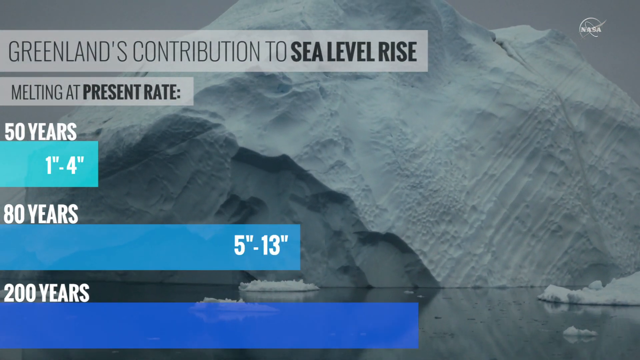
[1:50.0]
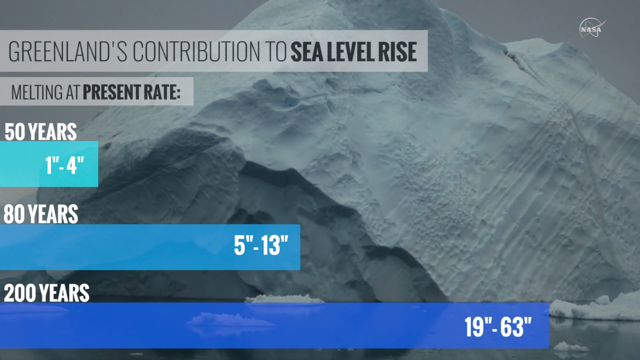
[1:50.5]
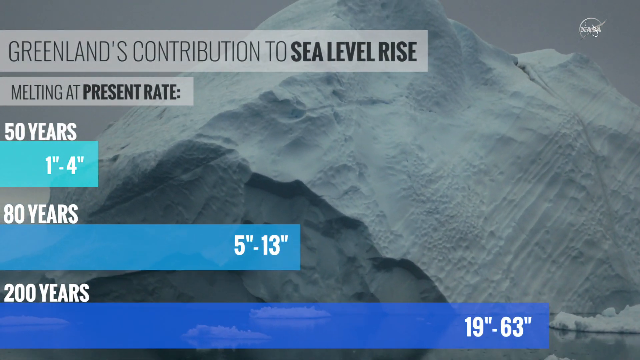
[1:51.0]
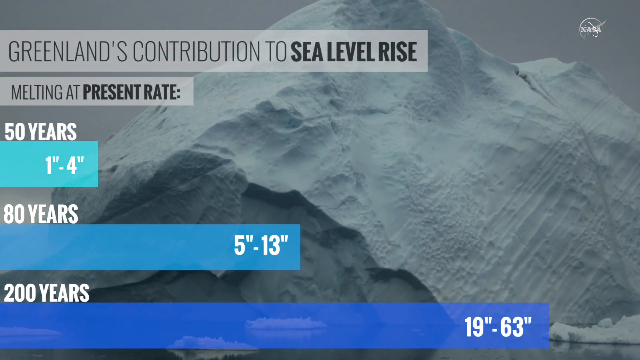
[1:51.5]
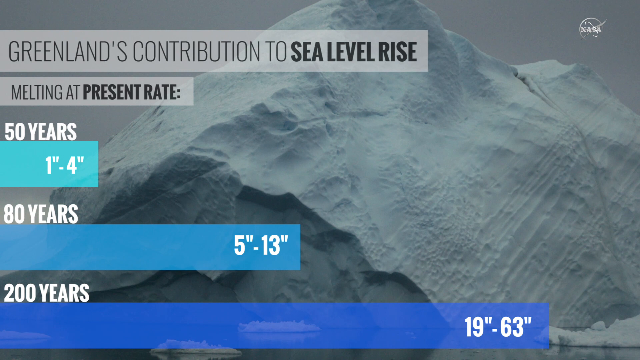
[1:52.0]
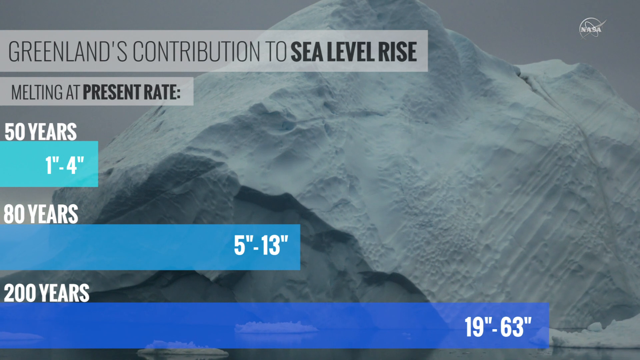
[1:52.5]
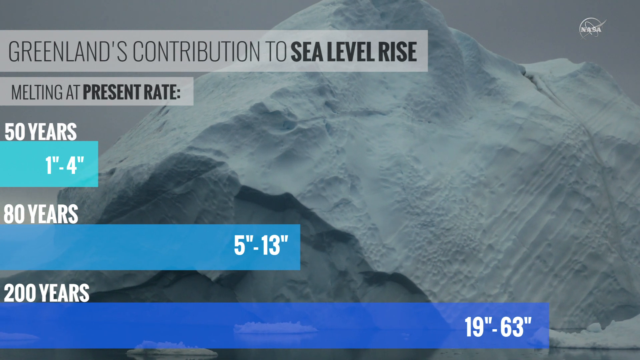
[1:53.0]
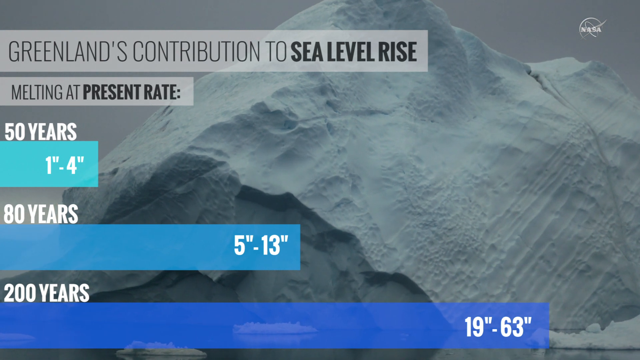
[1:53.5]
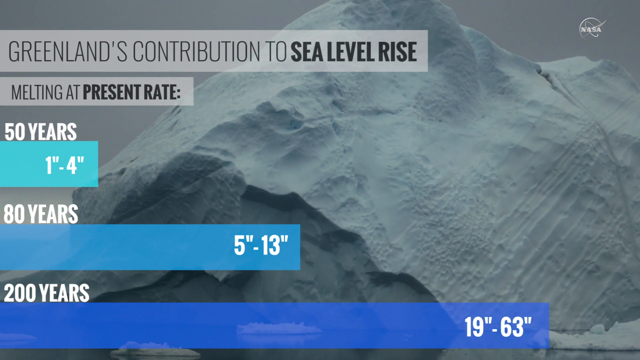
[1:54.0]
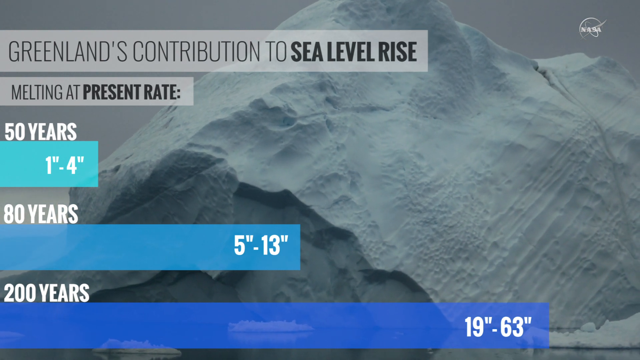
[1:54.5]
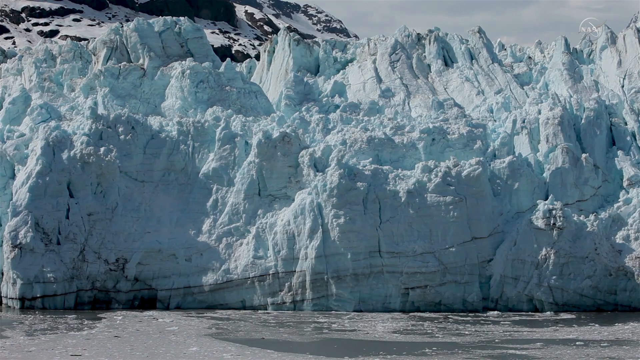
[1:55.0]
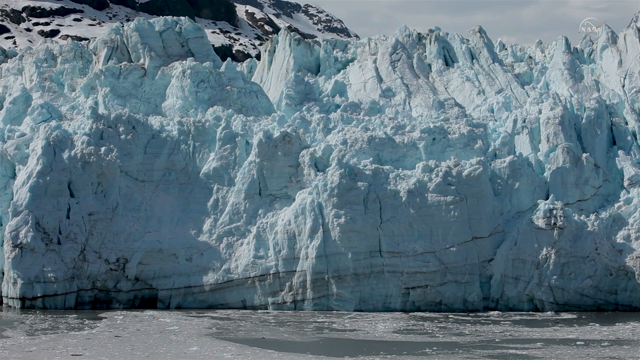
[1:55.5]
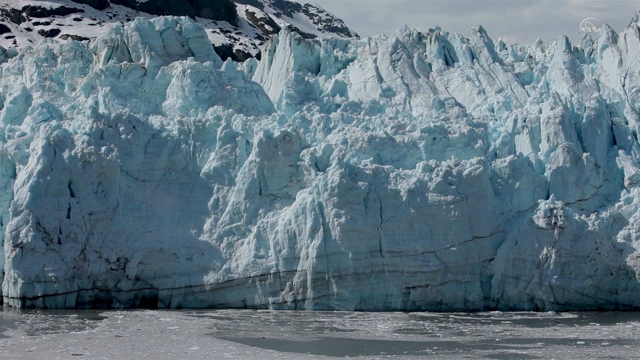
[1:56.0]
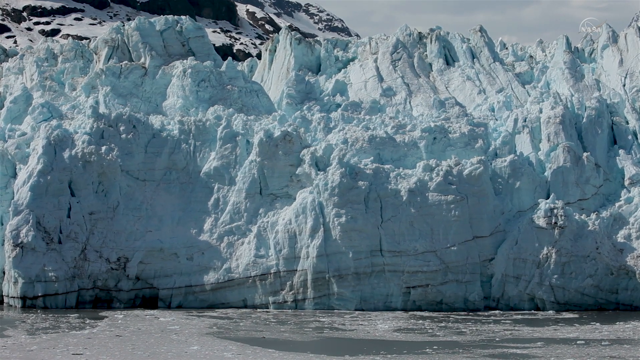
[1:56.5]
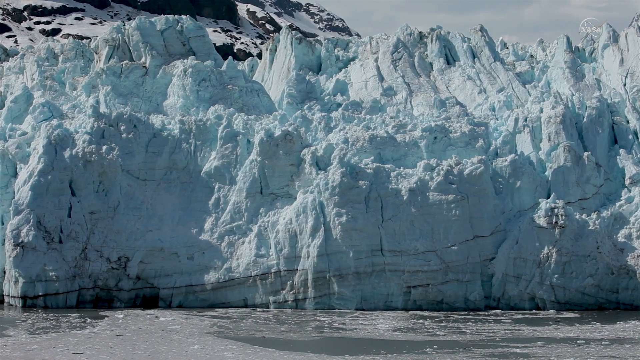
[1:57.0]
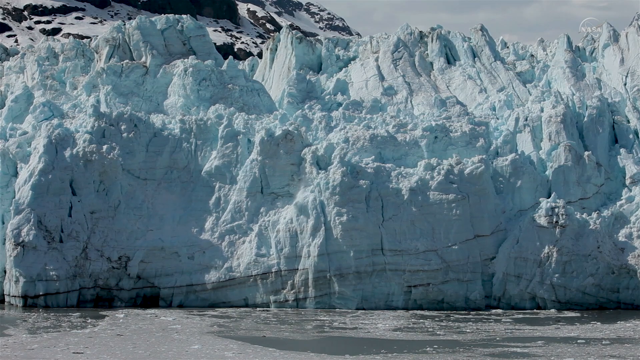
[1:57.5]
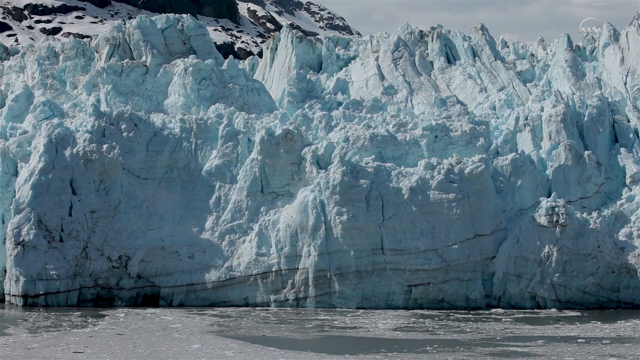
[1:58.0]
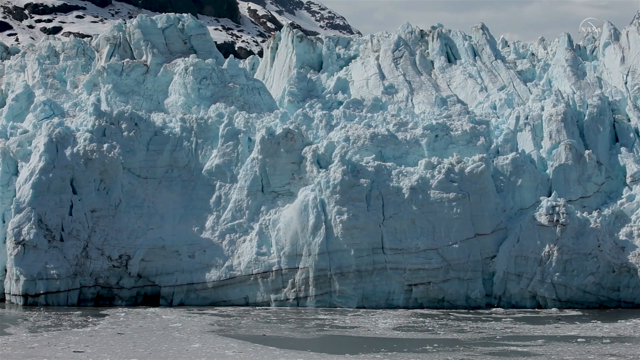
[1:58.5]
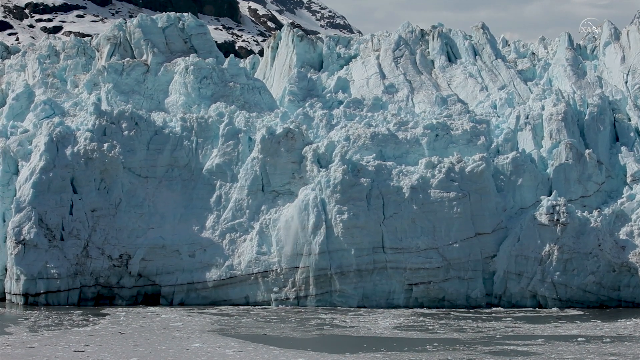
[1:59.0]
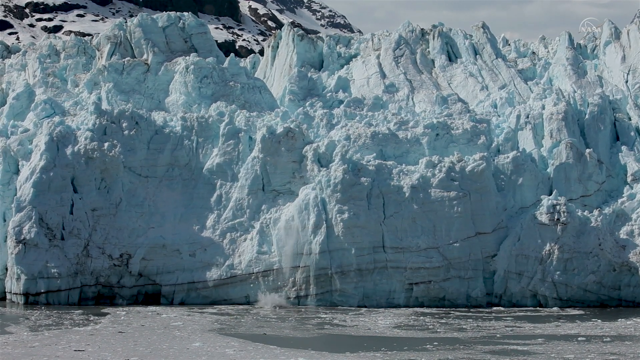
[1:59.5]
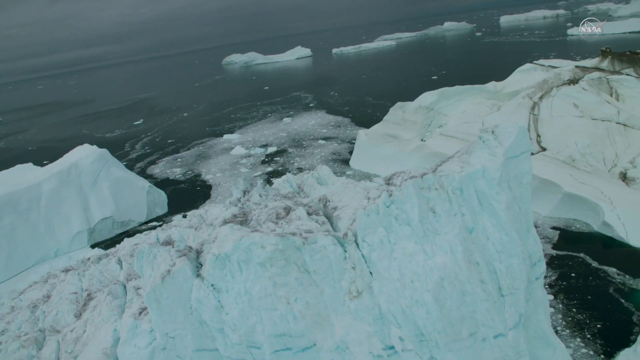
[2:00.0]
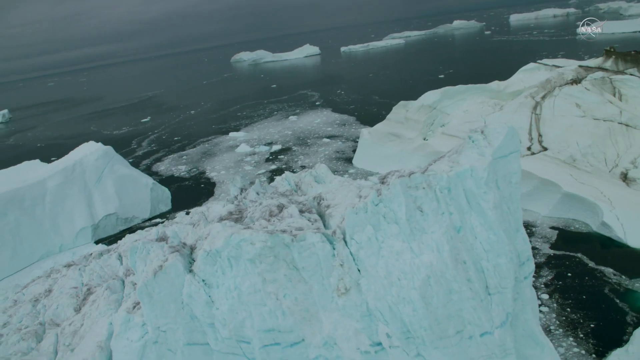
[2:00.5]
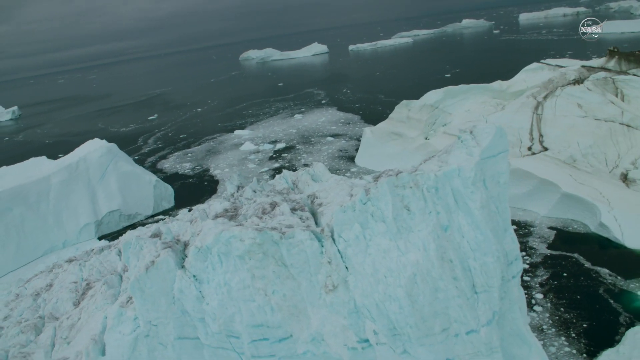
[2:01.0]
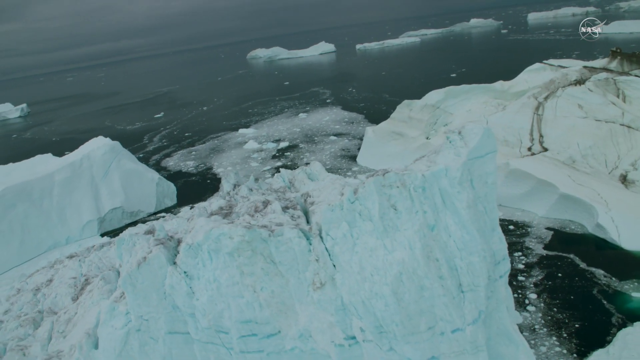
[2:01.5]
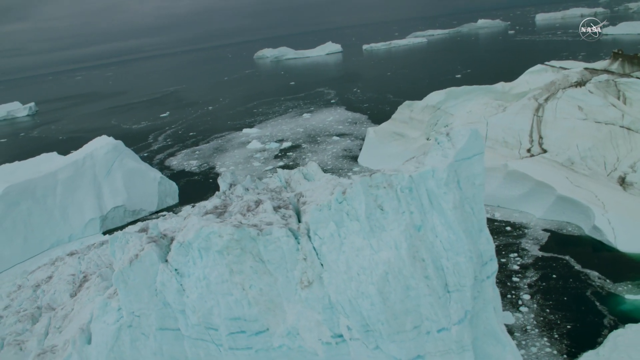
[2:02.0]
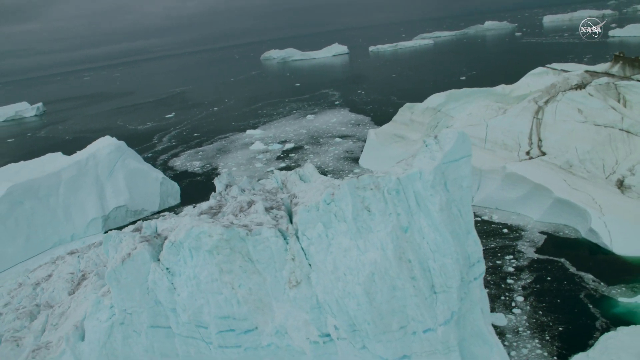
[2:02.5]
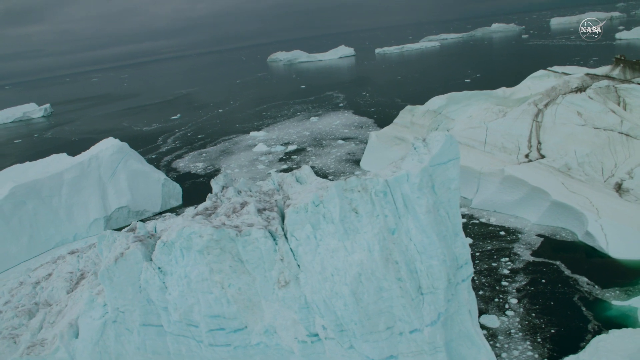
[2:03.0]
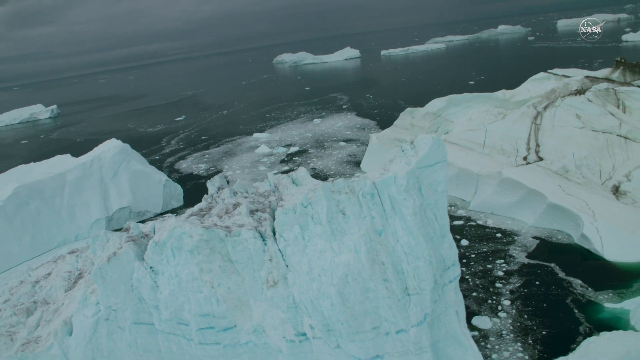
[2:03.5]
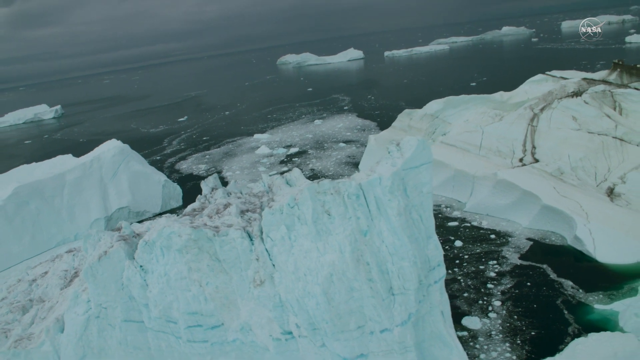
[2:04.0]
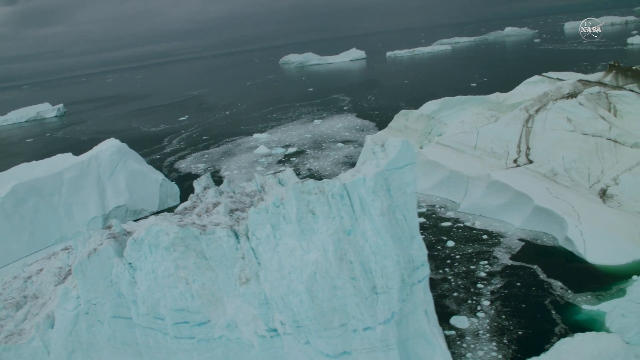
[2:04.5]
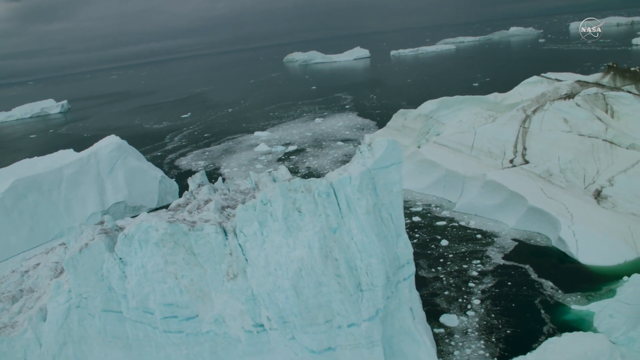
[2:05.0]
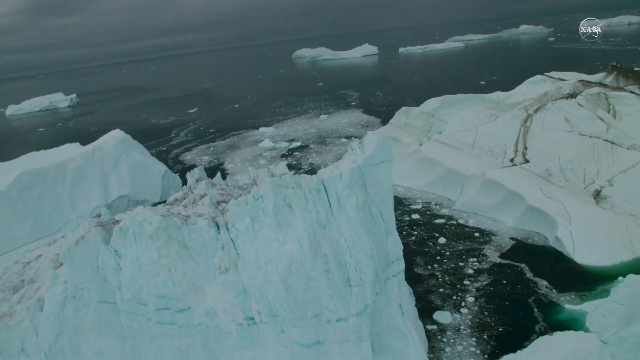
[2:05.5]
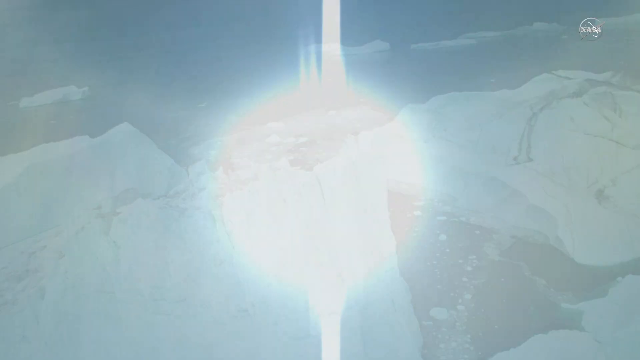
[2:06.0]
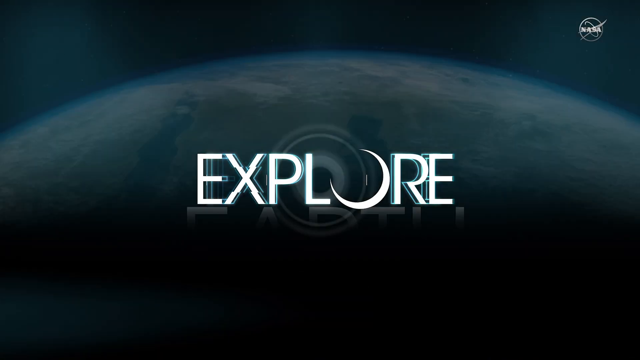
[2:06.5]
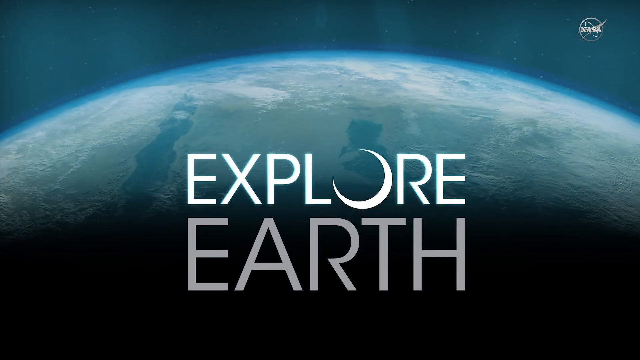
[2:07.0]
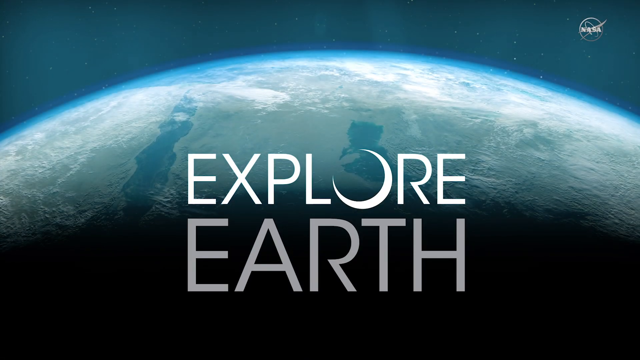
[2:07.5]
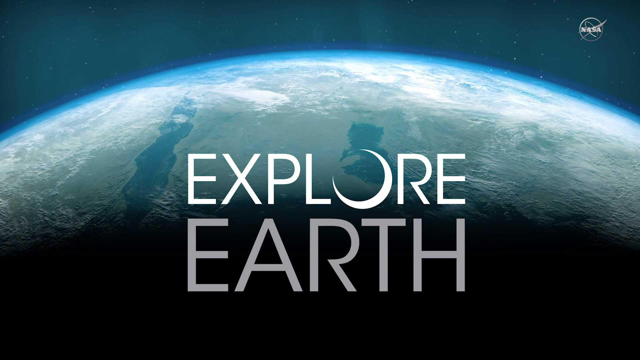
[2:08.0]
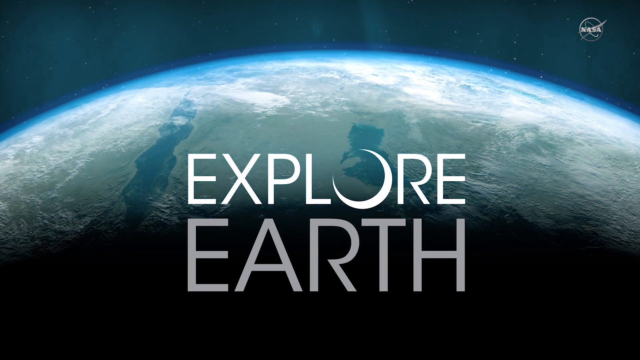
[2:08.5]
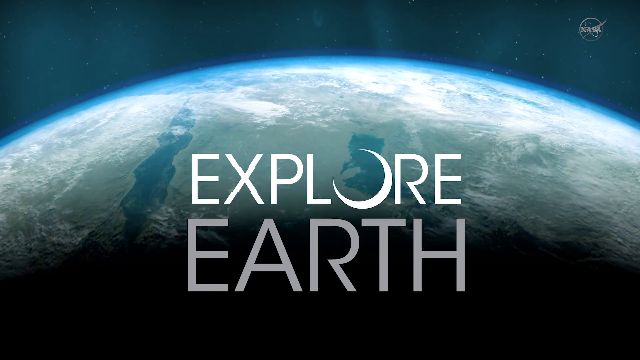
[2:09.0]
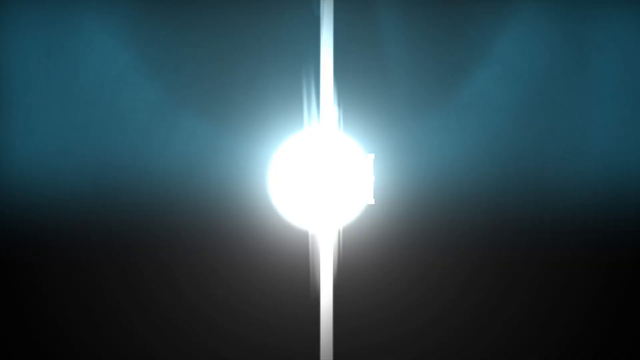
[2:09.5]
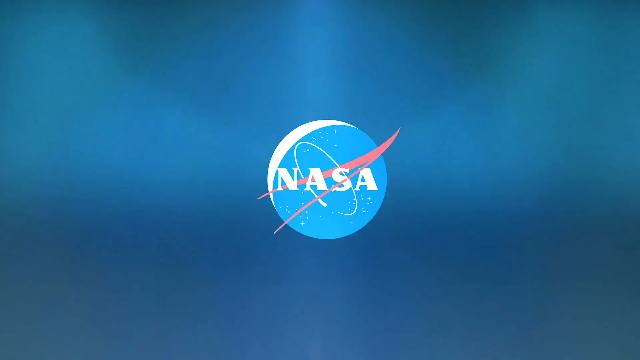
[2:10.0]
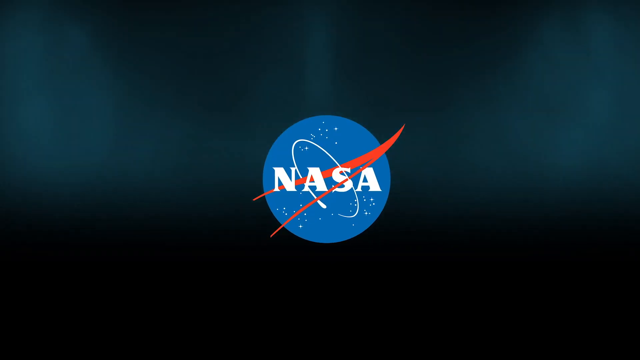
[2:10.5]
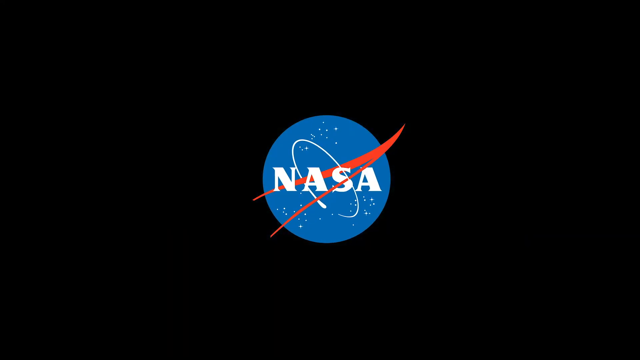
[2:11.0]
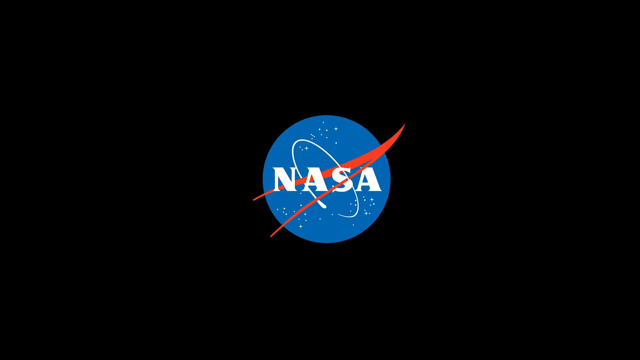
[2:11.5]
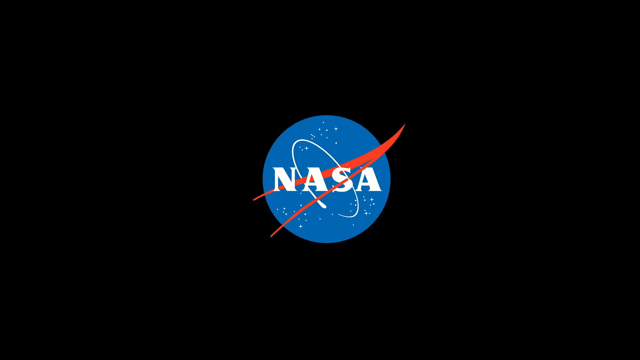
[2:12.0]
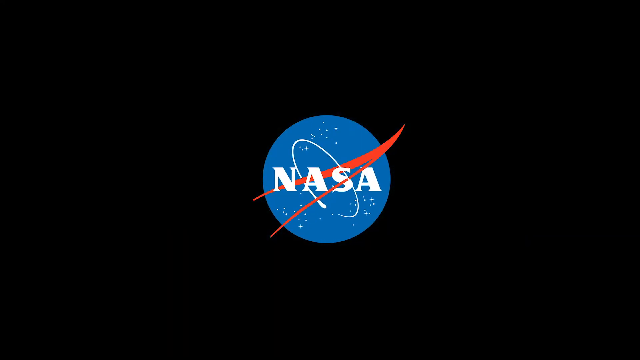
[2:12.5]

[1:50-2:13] Text over the image reads "Greenland's contribution to sea level rise melting at a present rate," followed by a 50-year melt average, then an 80-year melt average, and then a 200-year melt average, apparently a climate model predicting into the future. Large glaciers fill the rest of the images, in an unidentified location, either Alaska or Greenland. Toward the end, "Explore Earth" is shown, and the NASA logo is in the upper right corner. The very final screen shows the red, white and blue NASA logo.